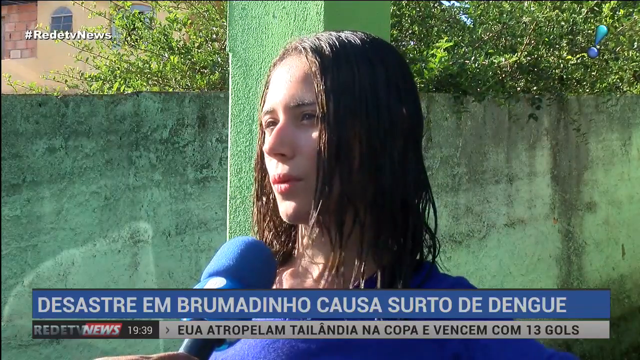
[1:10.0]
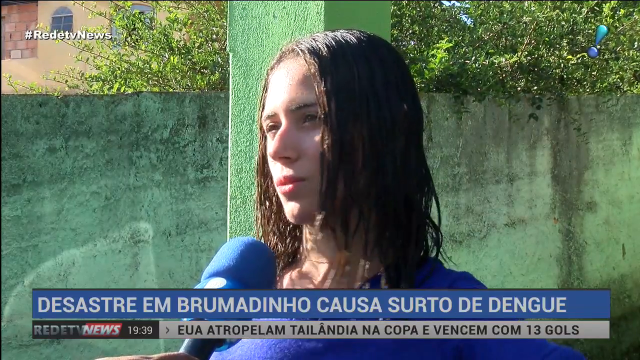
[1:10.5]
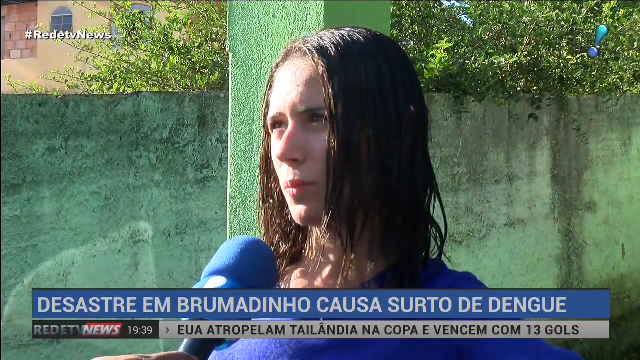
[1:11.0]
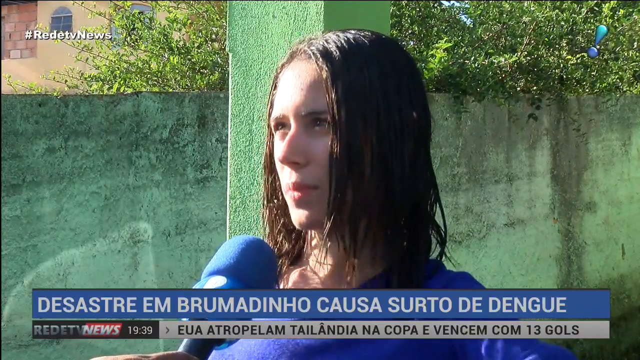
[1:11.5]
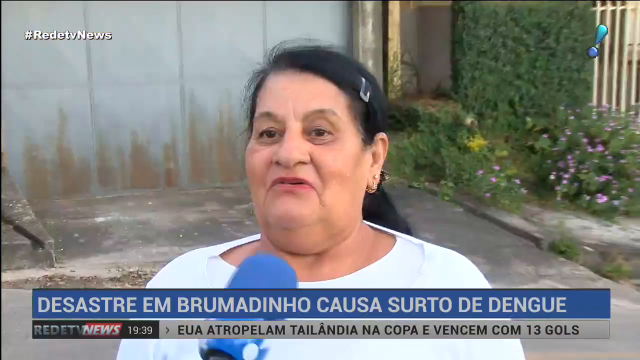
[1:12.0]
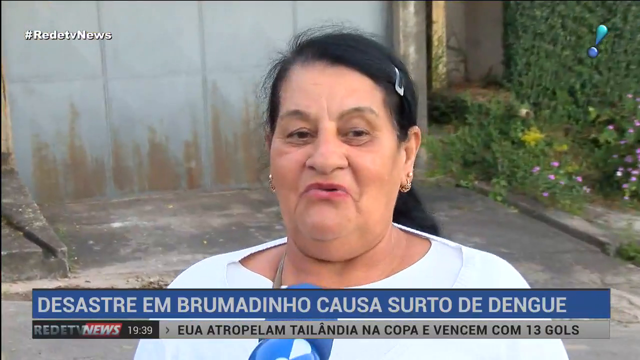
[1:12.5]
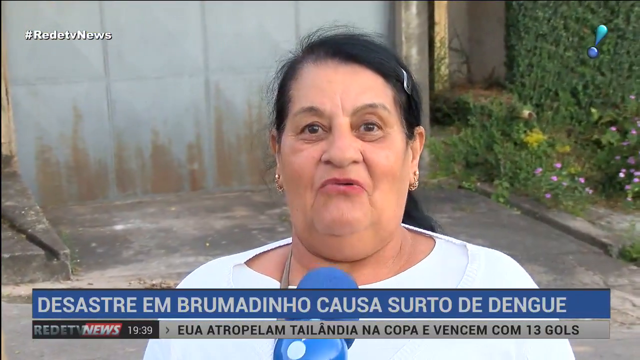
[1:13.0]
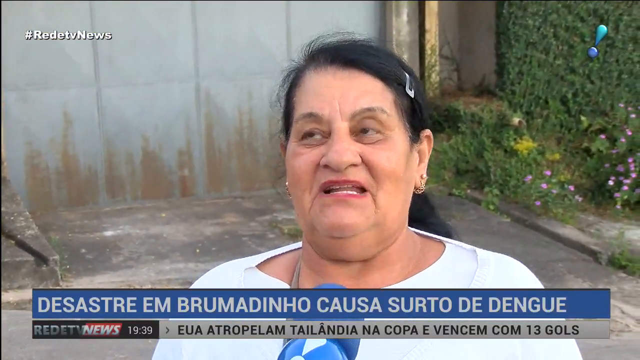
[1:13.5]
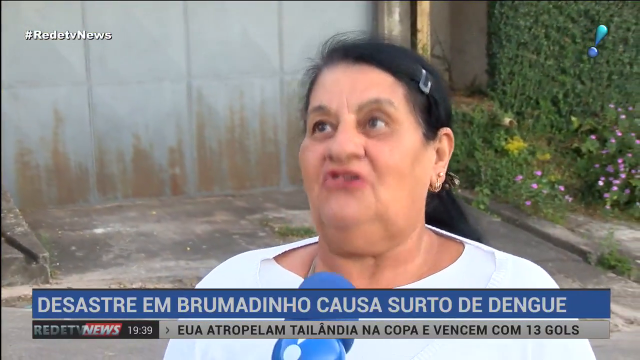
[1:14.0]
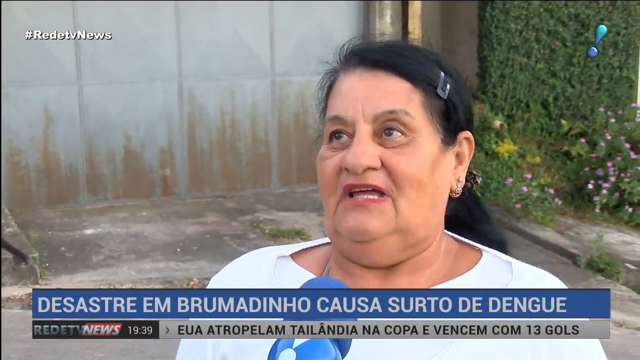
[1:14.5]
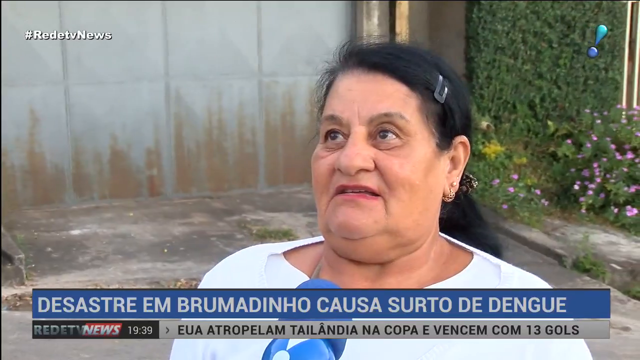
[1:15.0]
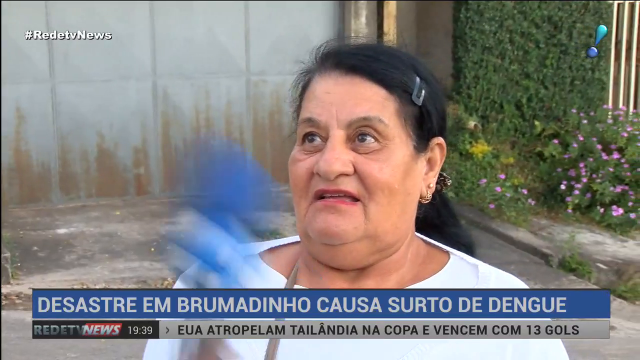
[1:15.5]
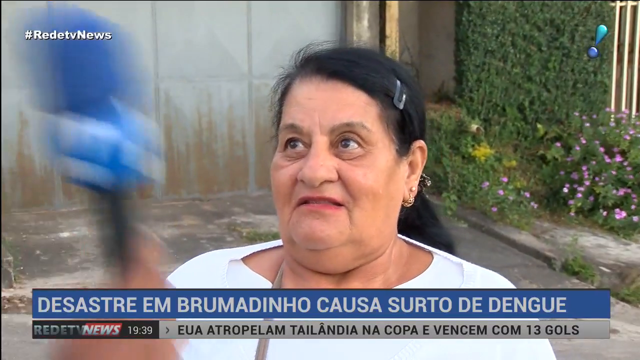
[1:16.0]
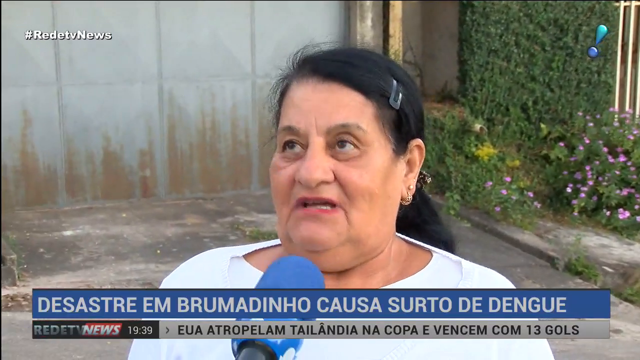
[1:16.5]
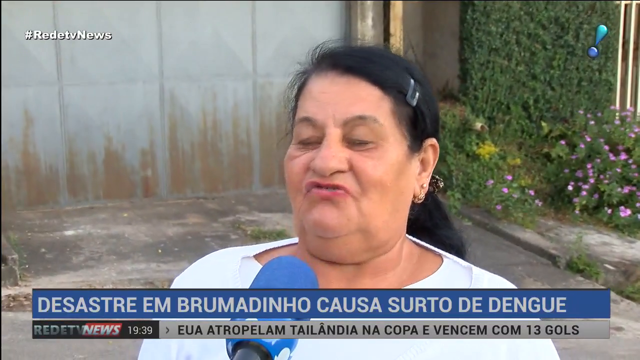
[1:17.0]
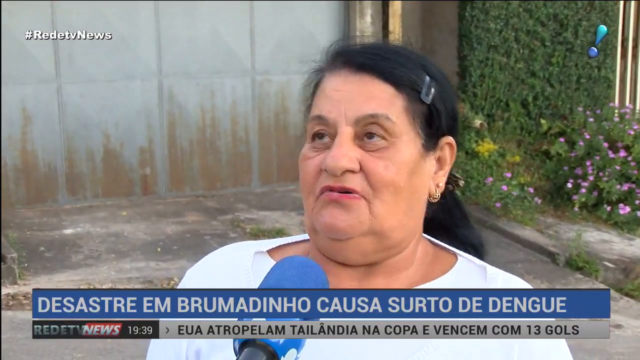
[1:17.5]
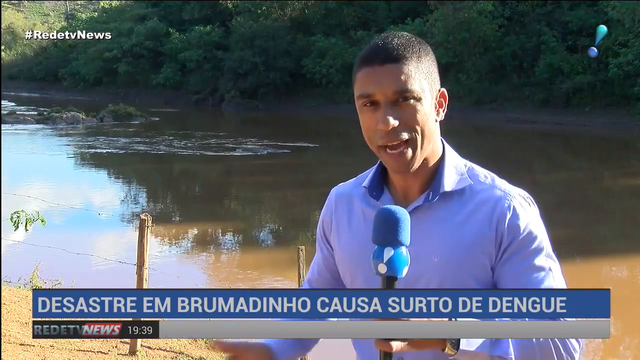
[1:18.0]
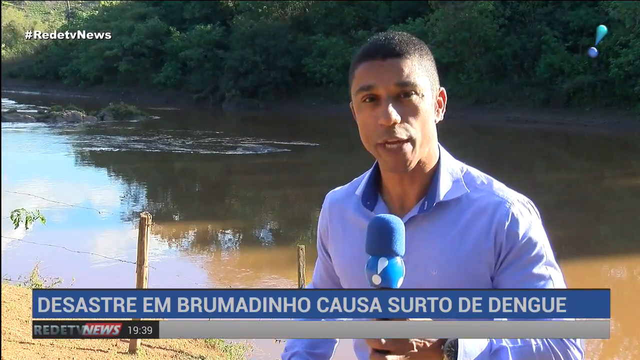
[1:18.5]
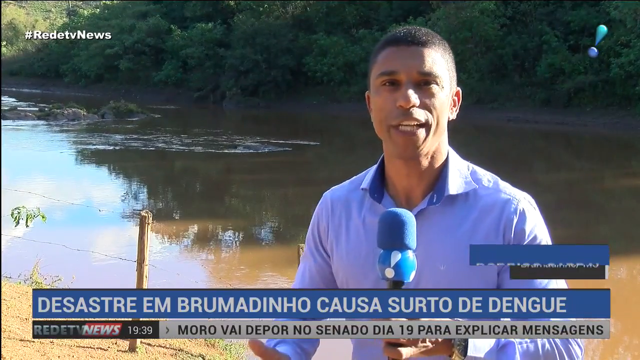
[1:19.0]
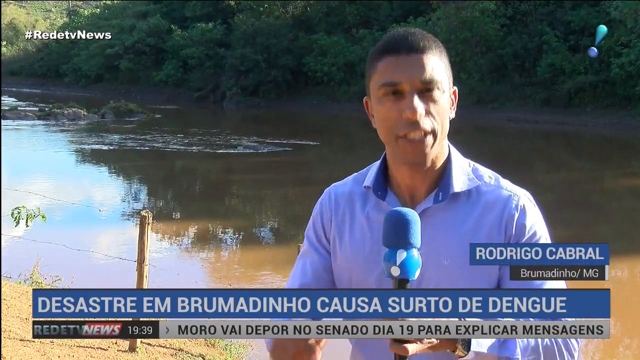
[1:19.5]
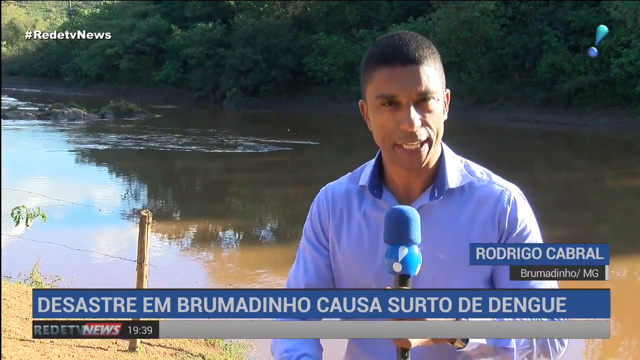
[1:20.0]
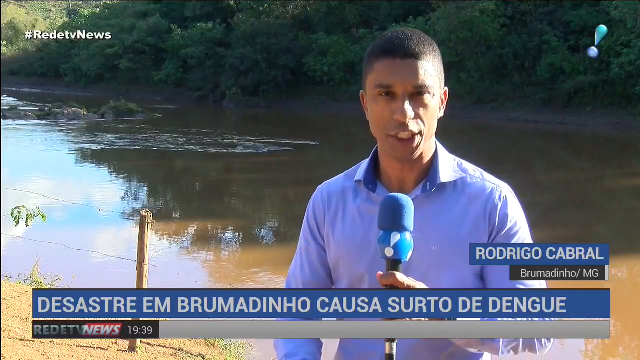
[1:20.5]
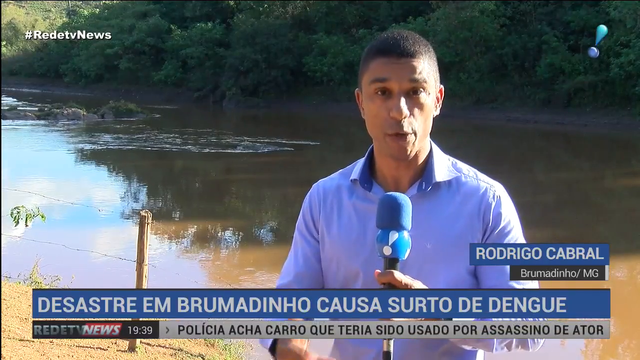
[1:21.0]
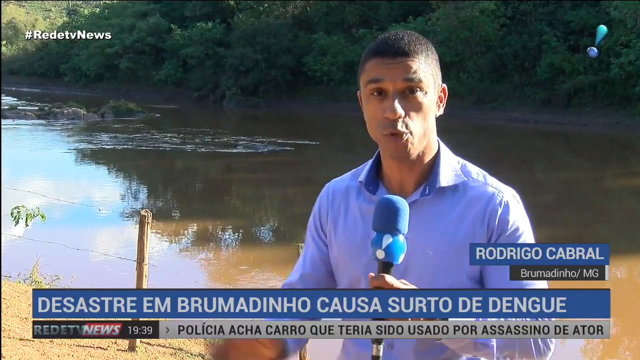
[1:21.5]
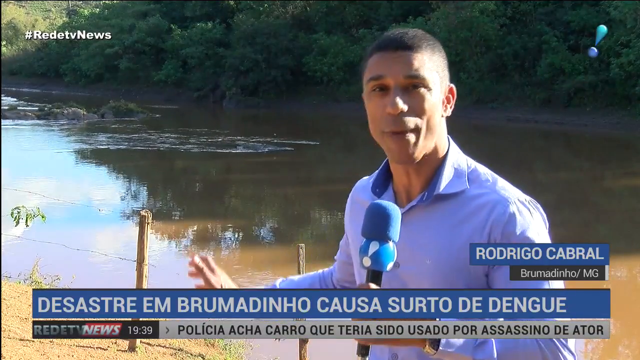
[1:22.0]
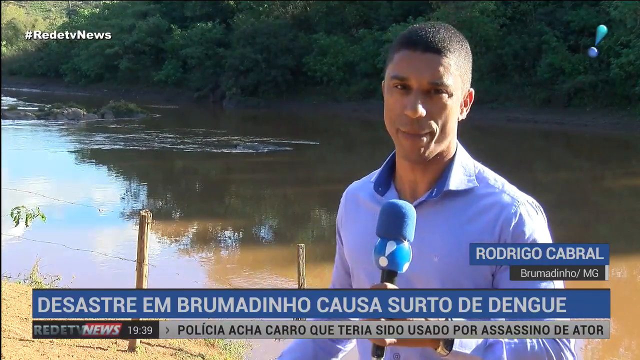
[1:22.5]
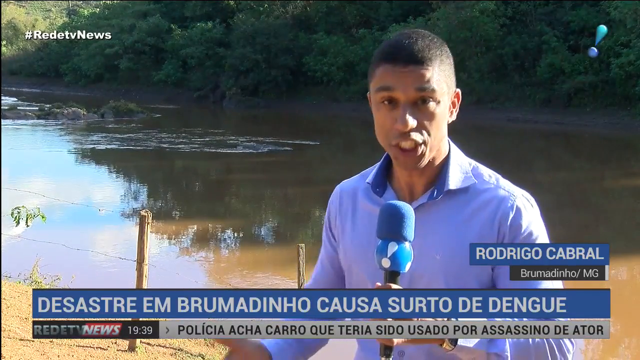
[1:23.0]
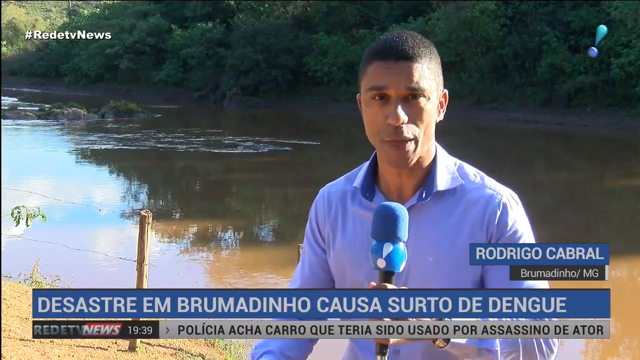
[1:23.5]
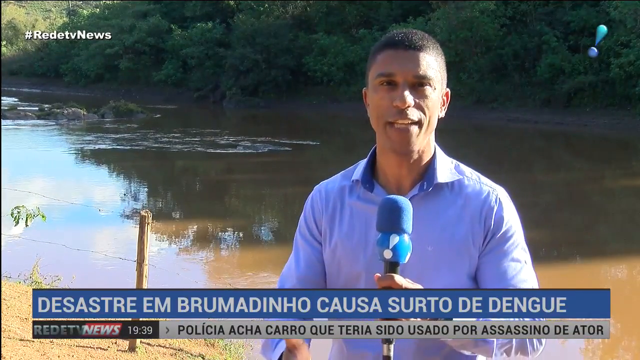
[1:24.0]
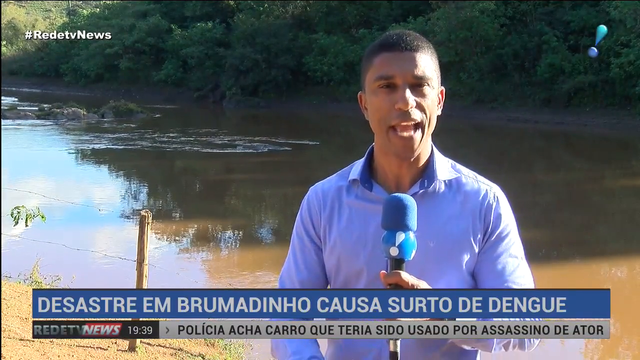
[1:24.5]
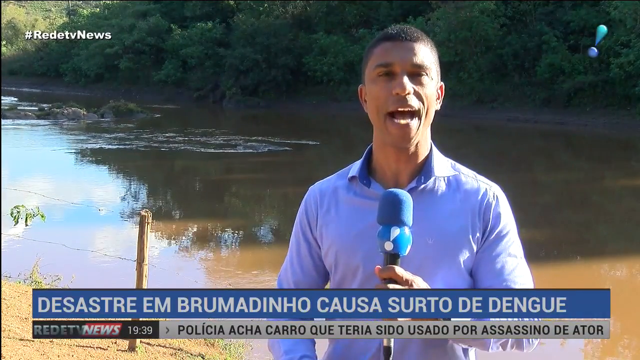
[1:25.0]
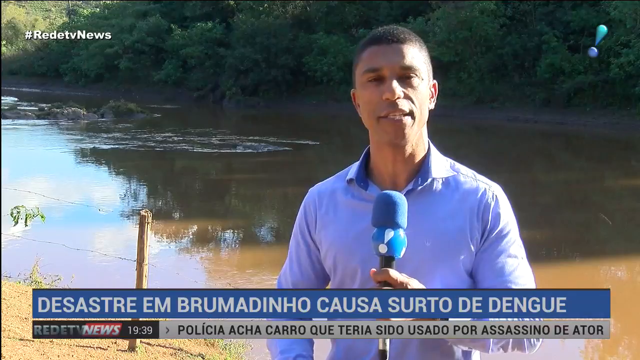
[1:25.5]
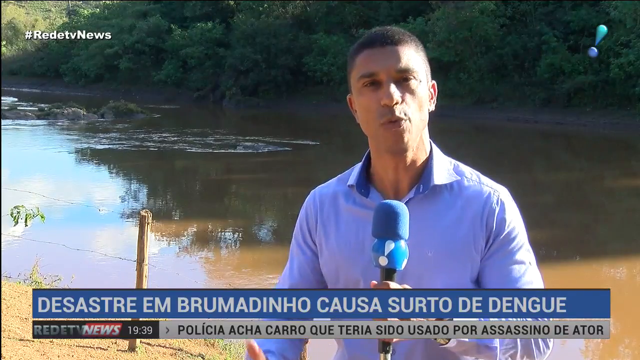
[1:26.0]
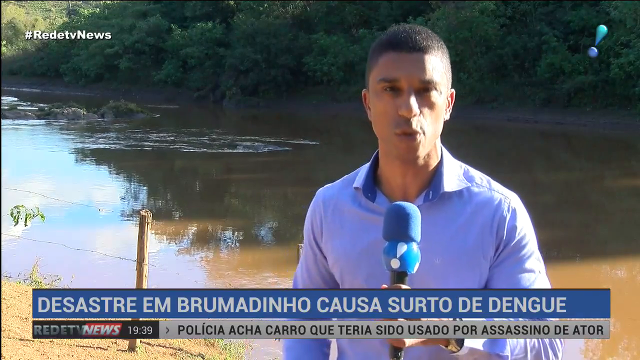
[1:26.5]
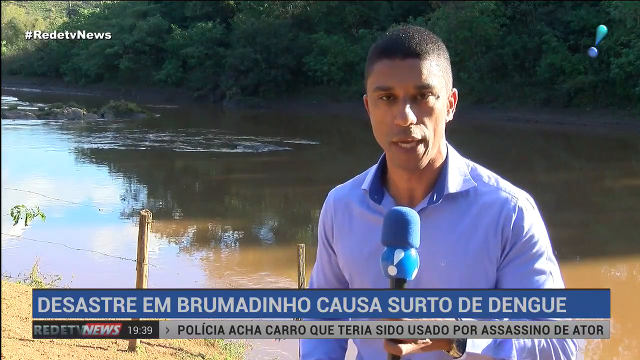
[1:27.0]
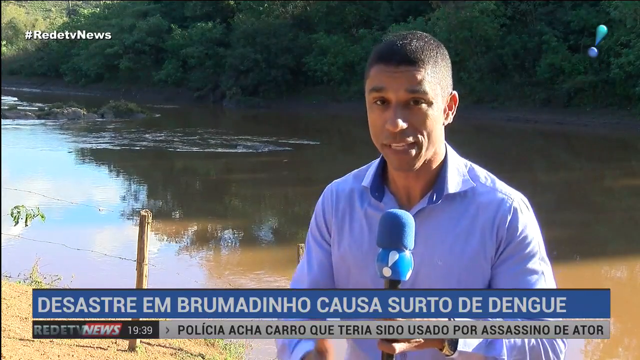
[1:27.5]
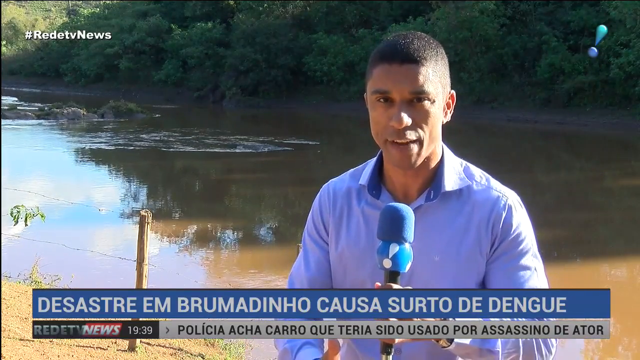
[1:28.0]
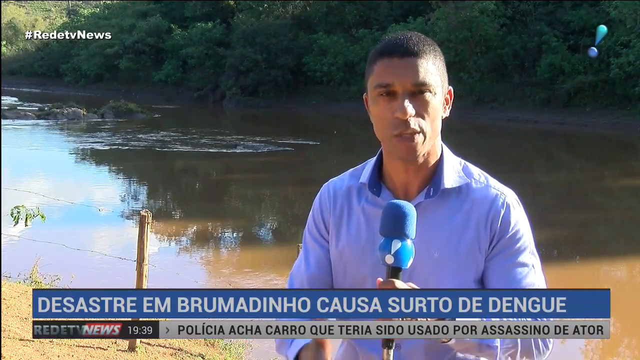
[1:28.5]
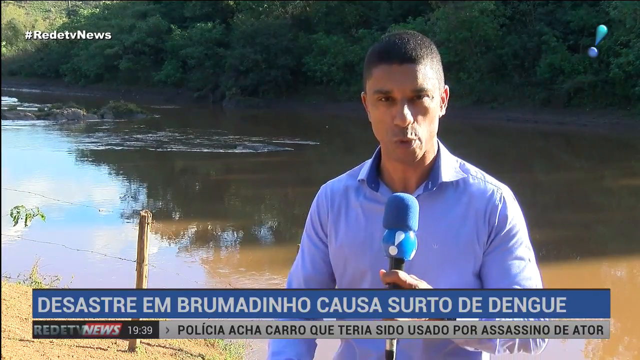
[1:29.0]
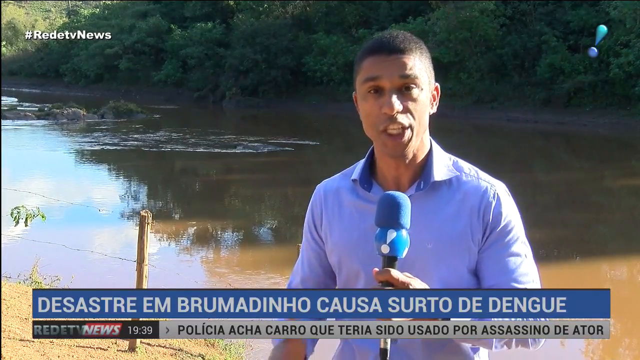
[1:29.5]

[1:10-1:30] The news team is outside, on site interviewing different people. The reporter, an African American man in a blue button-down shirt, stands in front of a lake, with trees and water behind him. He interviews a younger woman, maybe in her 20s, and then an older woman, probably in her 50s; behind the interviewees there is just what looks like a cement wall. The lake is visible, with a little bit of a fence and some rocks in the water. It is still Reddit TV News, and the reporter's name is Rodrigo Cabral.